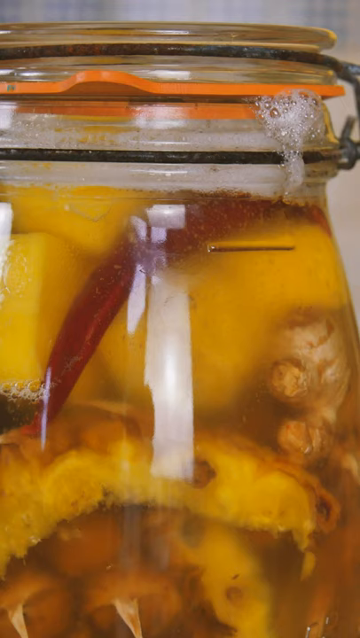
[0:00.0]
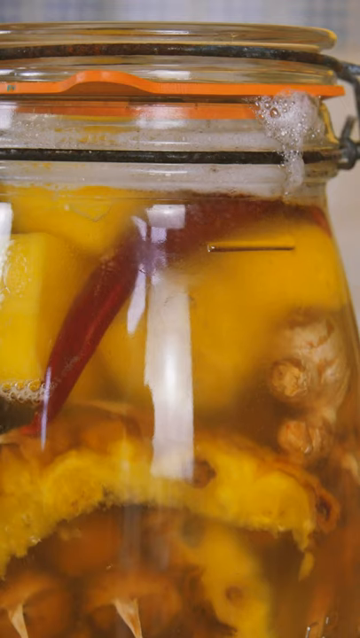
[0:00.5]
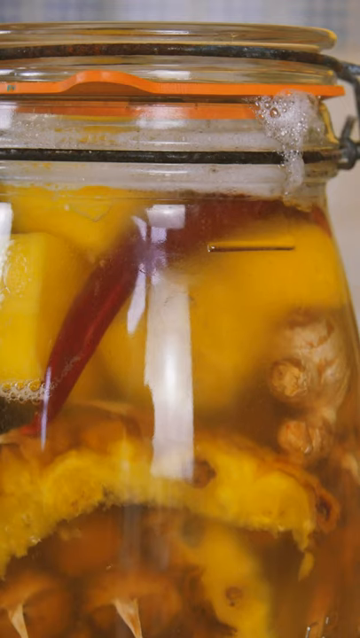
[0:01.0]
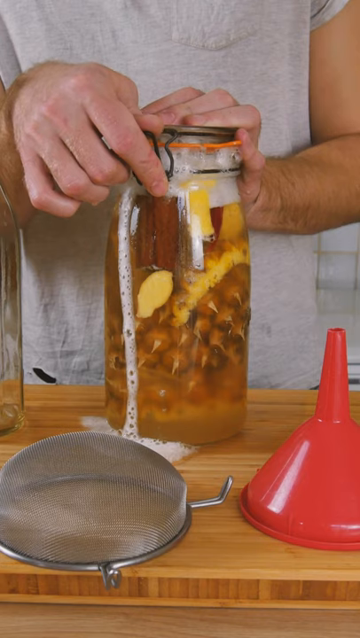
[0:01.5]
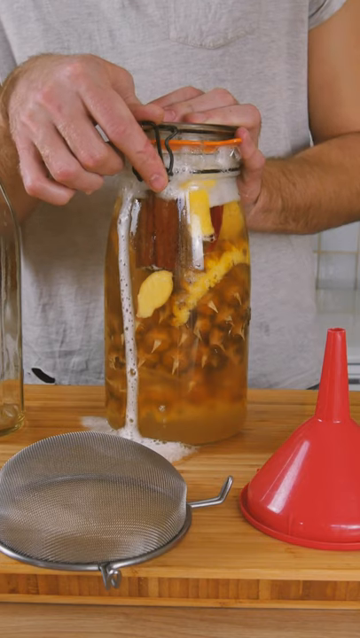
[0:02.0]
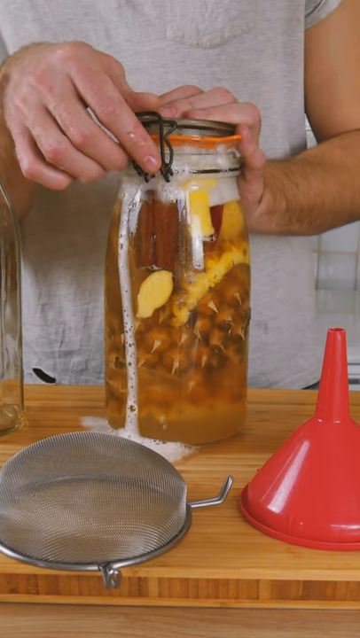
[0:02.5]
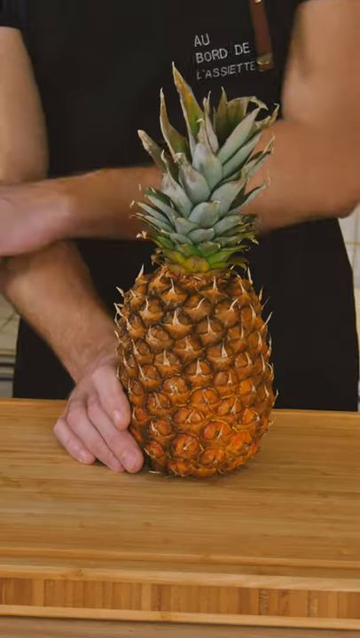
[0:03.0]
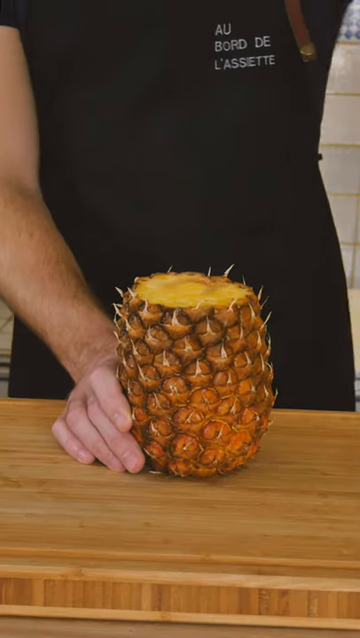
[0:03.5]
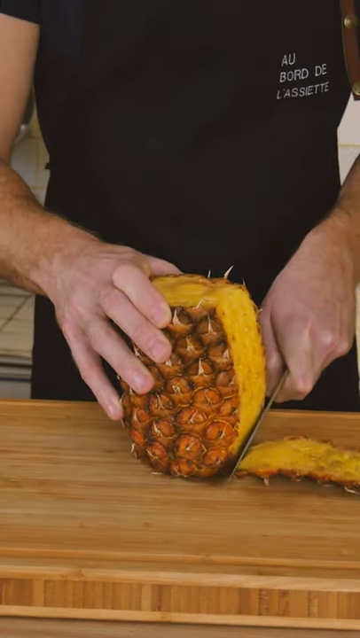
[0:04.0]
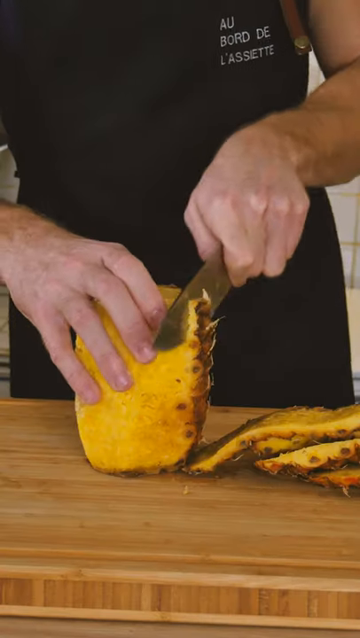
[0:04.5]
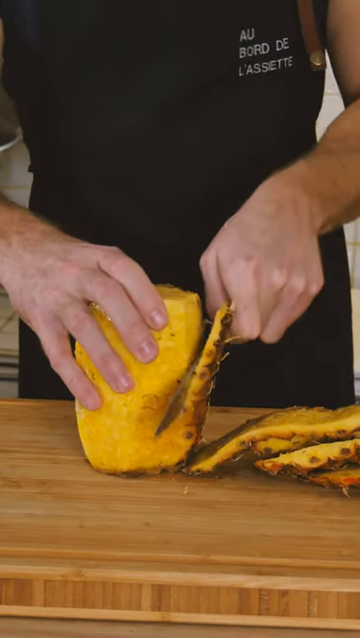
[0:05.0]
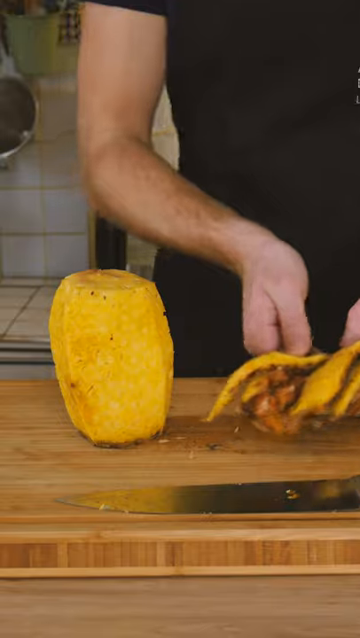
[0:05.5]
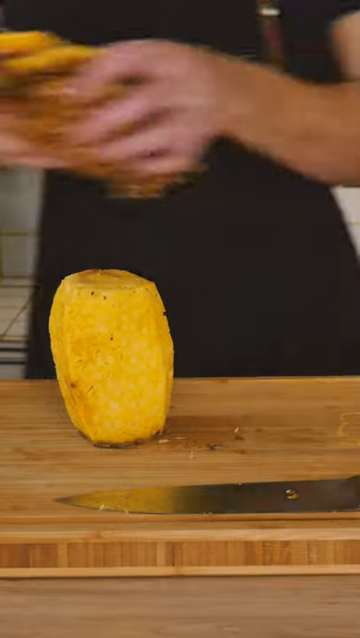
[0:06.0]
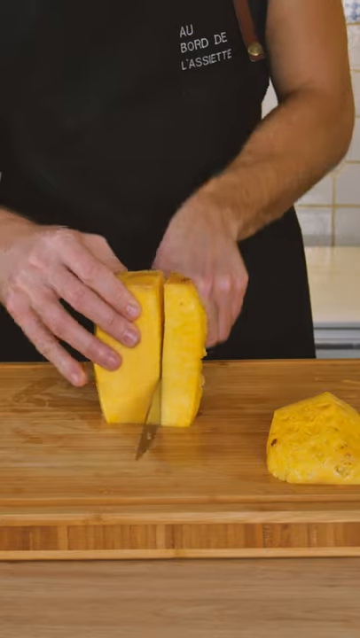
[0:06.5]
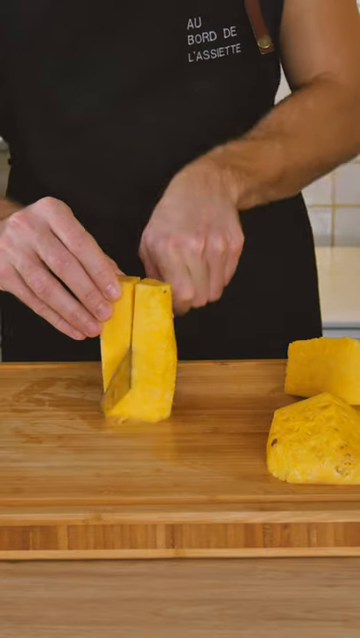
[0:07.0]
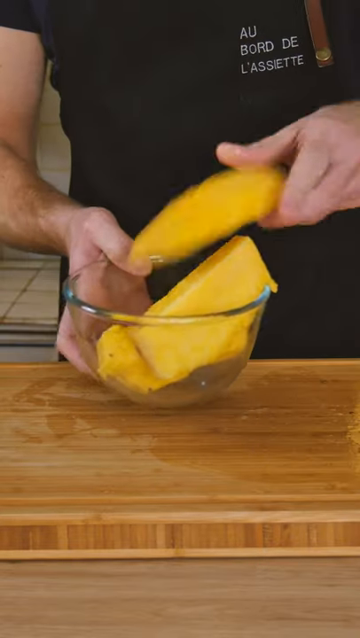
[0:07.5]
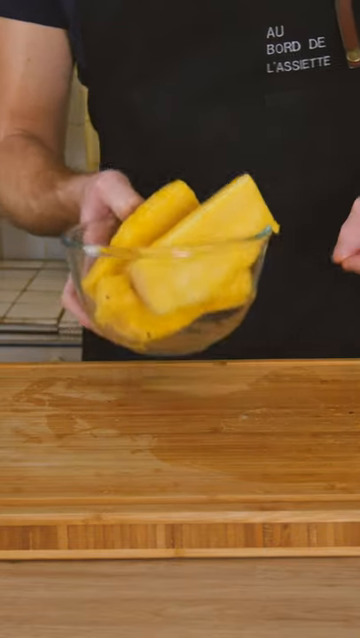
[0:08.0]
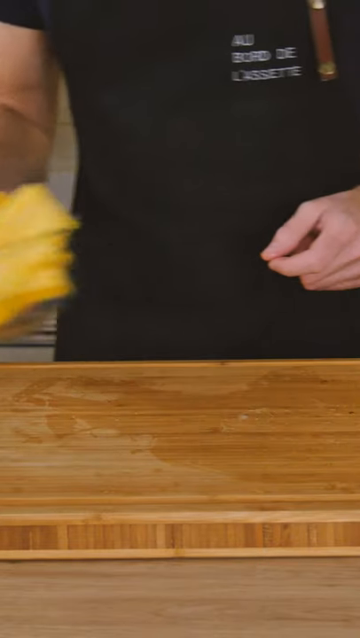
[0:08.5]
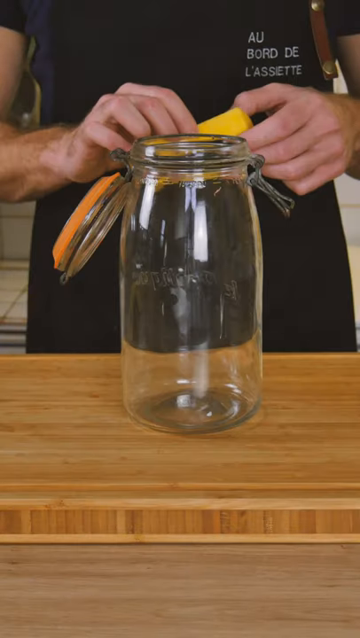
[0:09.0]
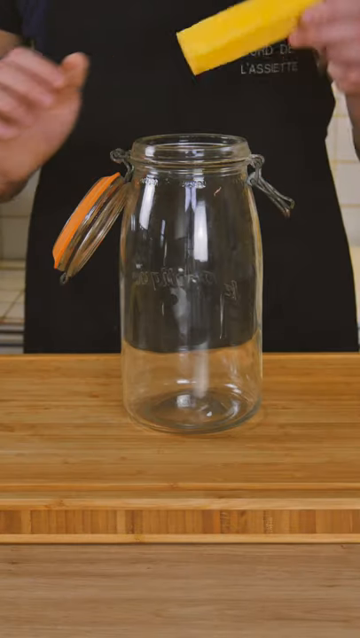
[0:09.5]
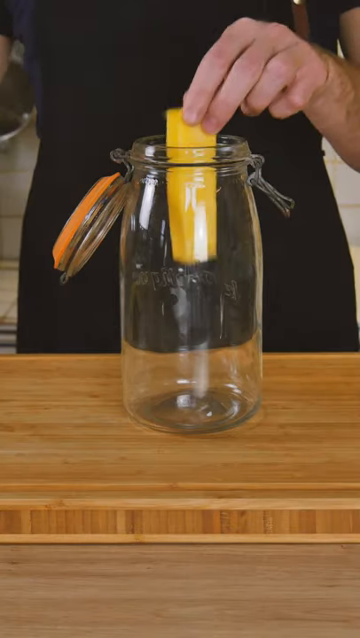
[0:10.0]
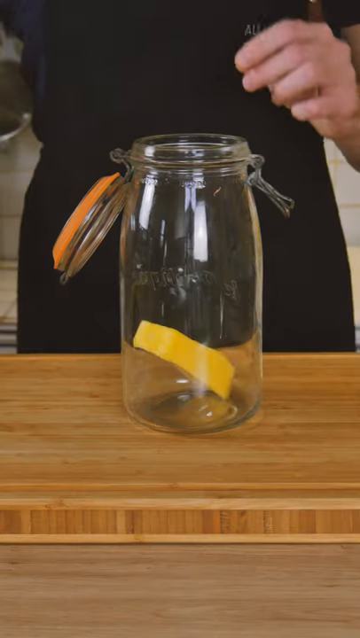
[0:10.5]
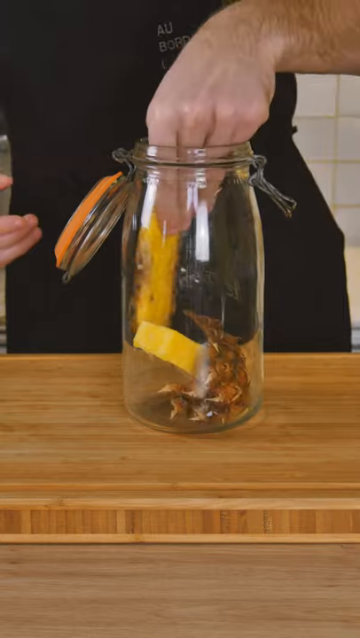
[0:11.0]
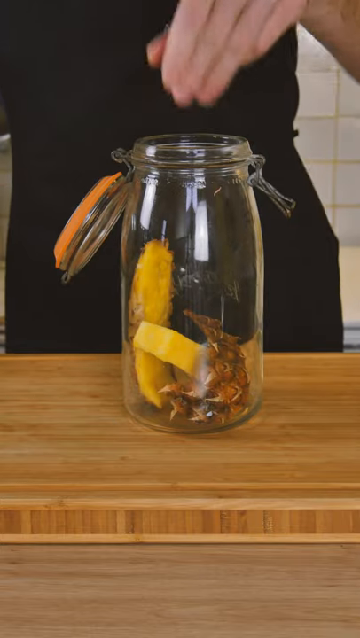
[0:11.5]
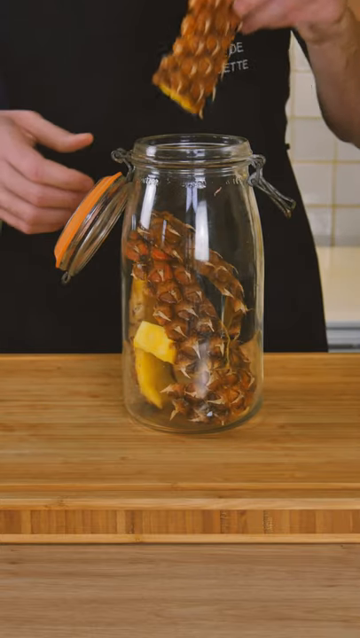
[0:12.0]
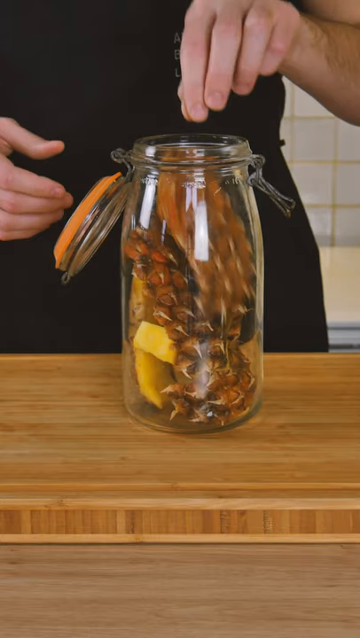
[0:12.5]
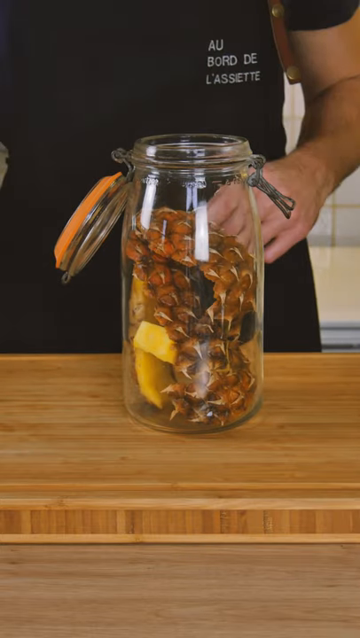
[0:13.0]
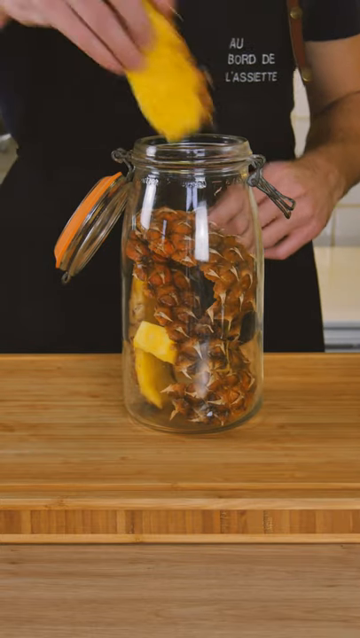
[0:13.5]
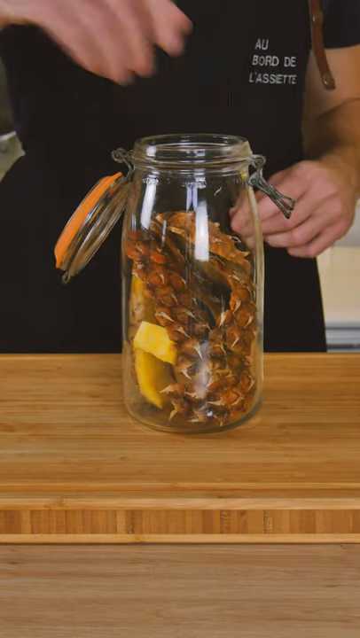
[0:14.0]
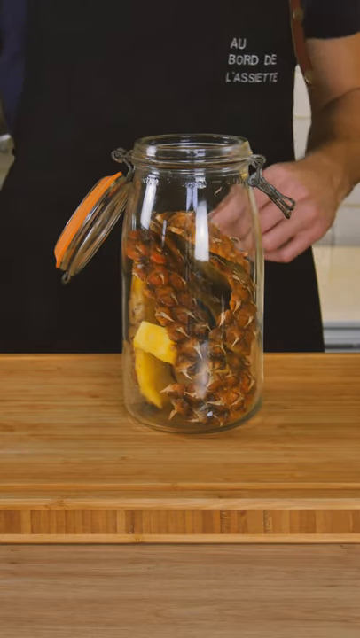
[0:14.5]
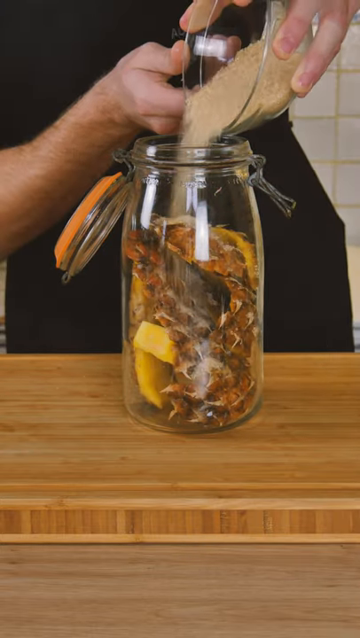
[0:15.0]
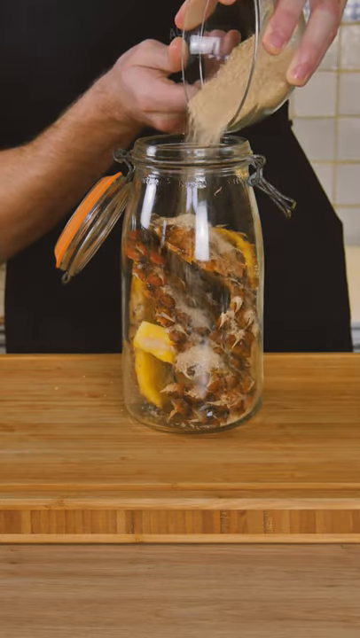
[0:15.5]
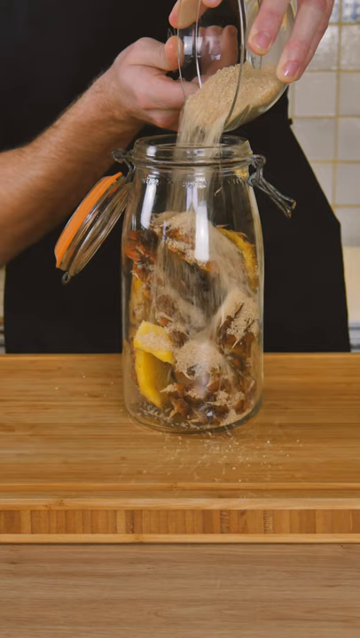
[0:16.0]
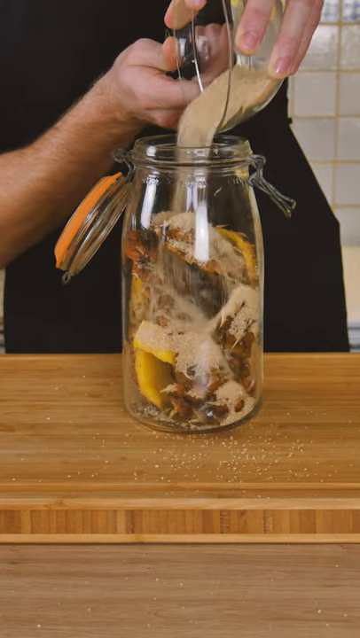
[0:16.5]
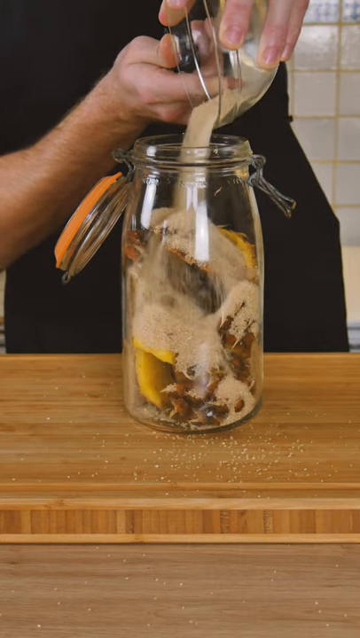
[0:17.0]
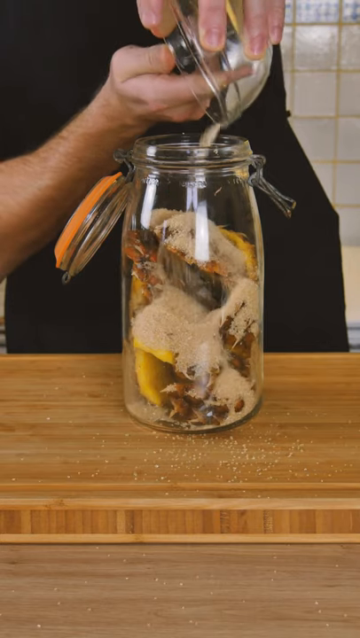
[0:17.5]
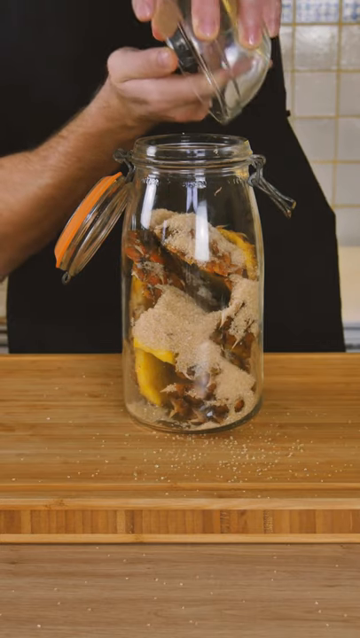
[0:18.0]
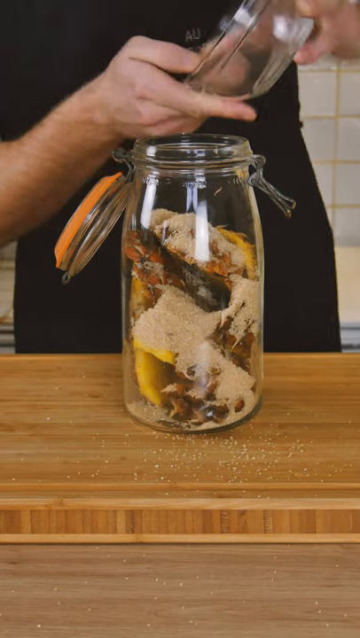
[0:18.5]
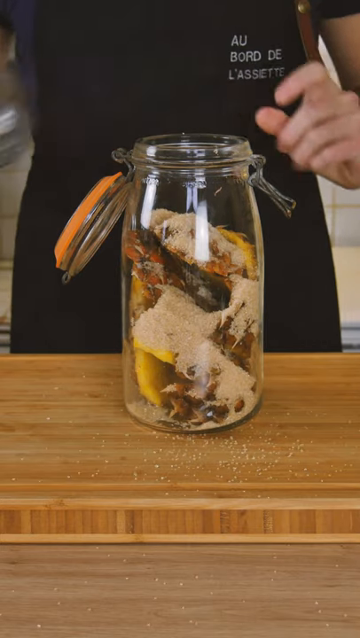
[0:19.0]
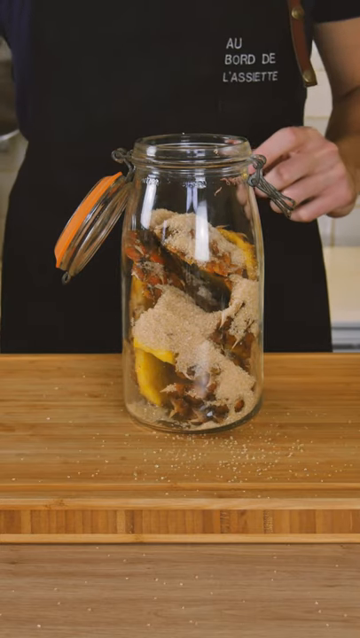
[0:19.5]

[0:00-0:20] A close-up shows a glass jar holding a foamy, clear liquid with what appear to be pineapple slices in it, and someone's hands open the jar. The next shot shows someone cutting the top off a pineapple. They peel off the outside and set it aside, then chop the pineapple into quarters. The empty glass jar is shown, and they put the pineapple peels into it. They put something light brown over the peels, possibly rice or sugar. A logo in the corner of the video says "ABDA".